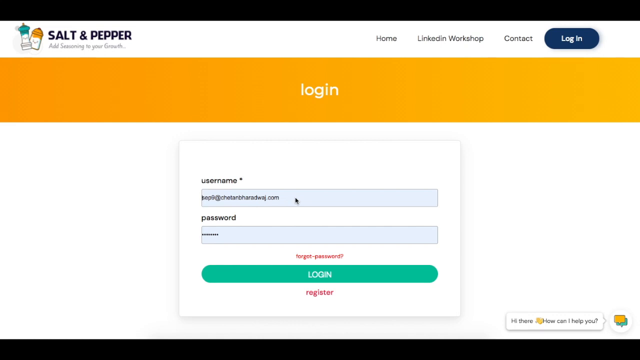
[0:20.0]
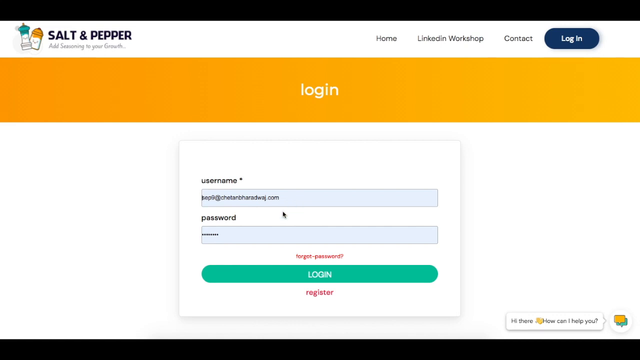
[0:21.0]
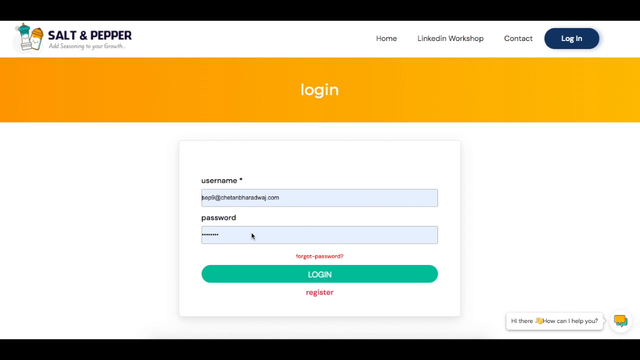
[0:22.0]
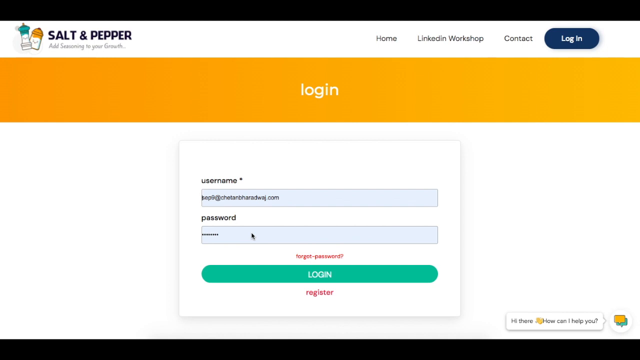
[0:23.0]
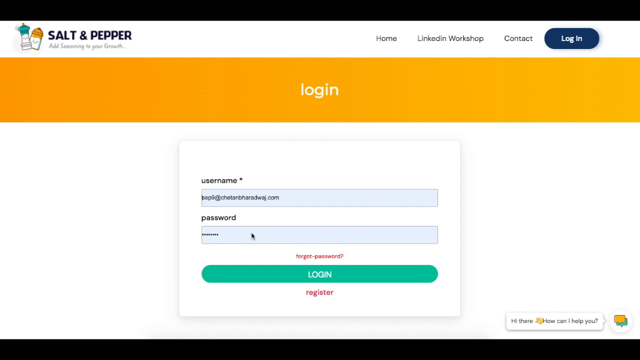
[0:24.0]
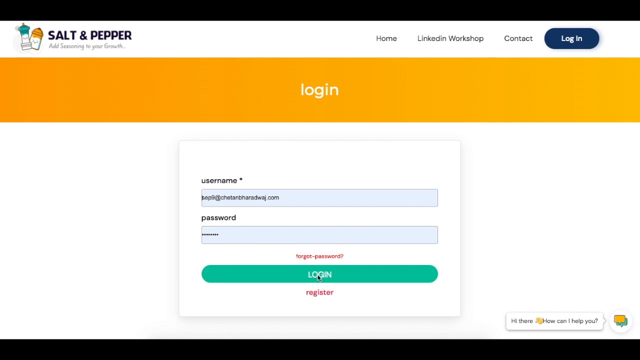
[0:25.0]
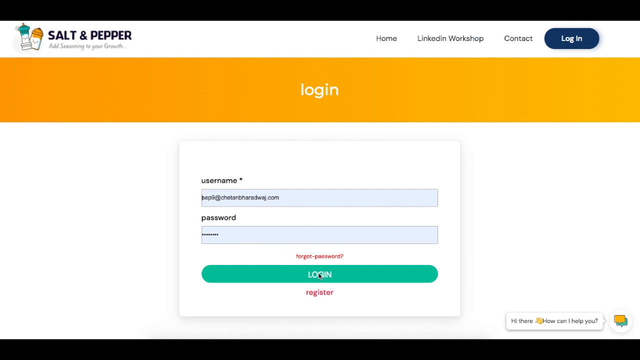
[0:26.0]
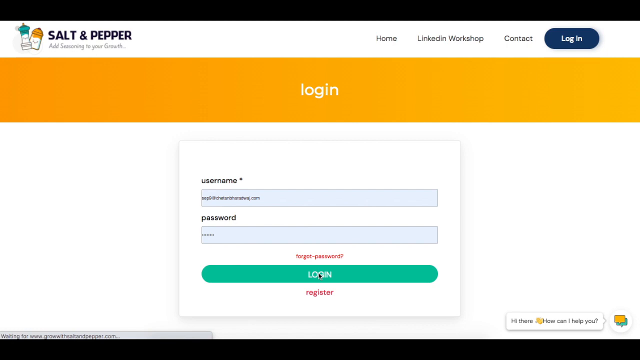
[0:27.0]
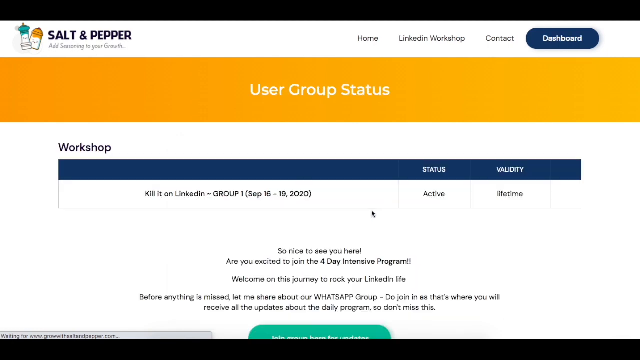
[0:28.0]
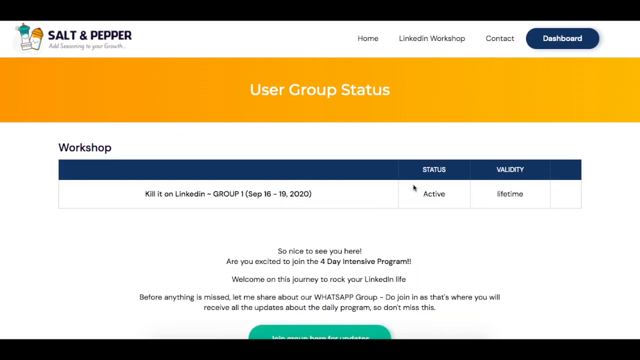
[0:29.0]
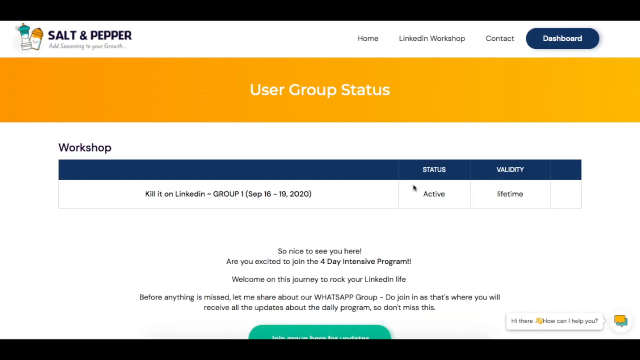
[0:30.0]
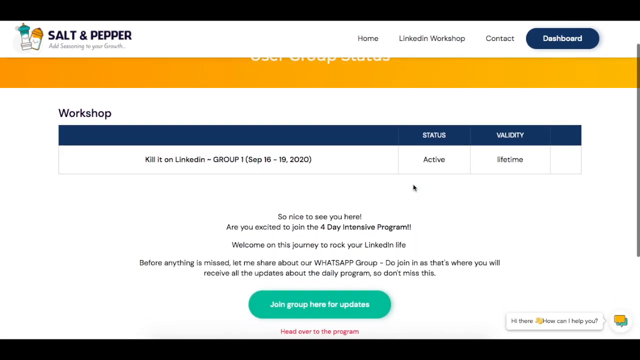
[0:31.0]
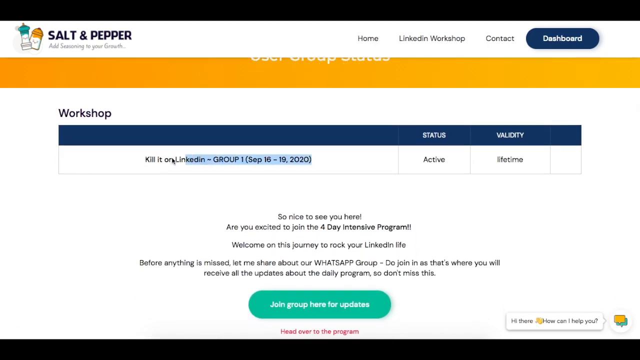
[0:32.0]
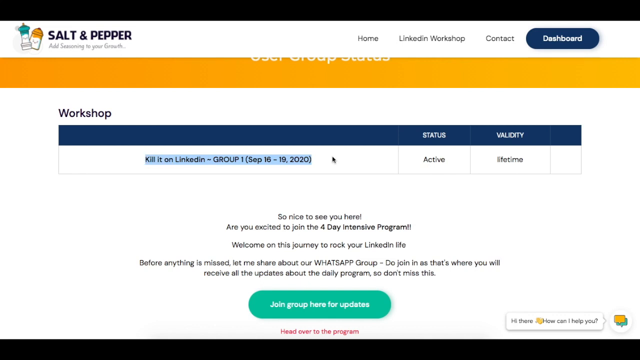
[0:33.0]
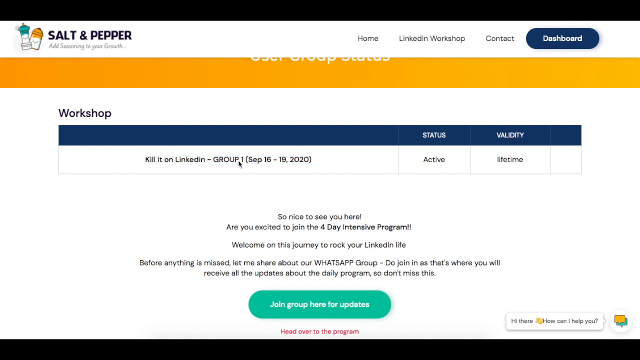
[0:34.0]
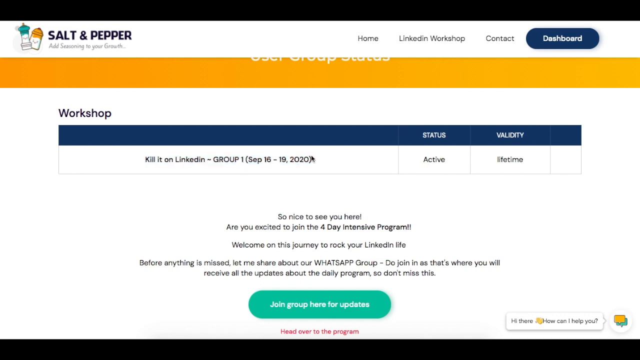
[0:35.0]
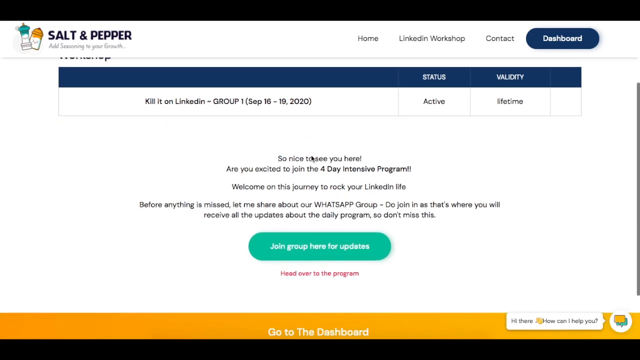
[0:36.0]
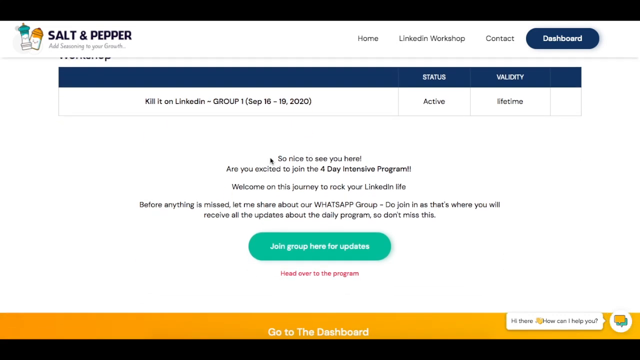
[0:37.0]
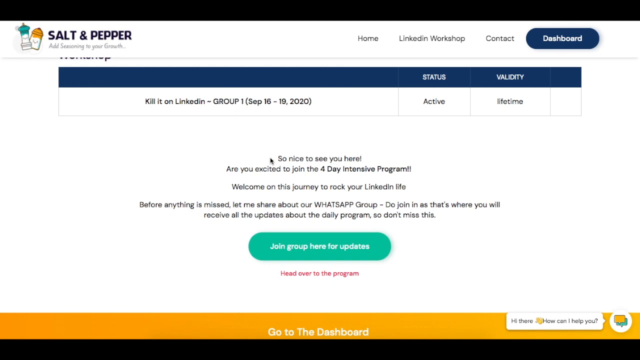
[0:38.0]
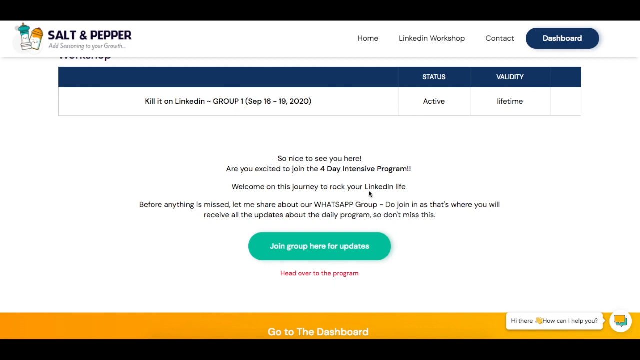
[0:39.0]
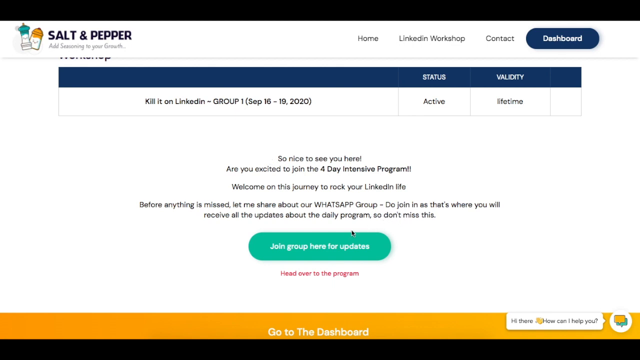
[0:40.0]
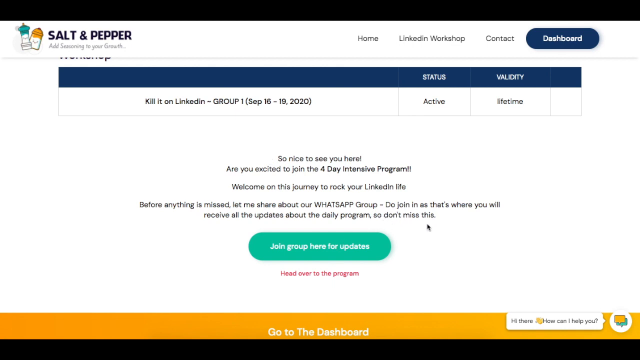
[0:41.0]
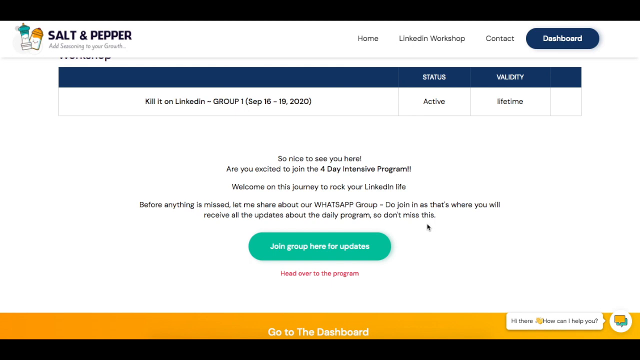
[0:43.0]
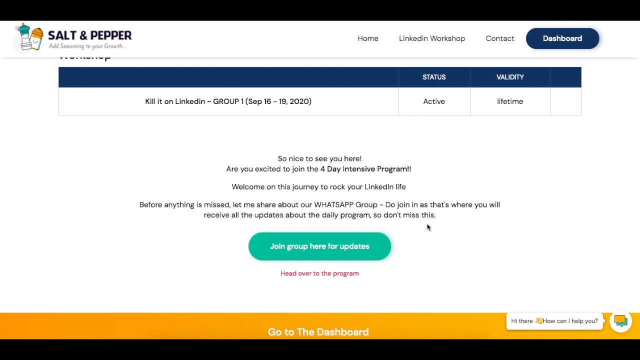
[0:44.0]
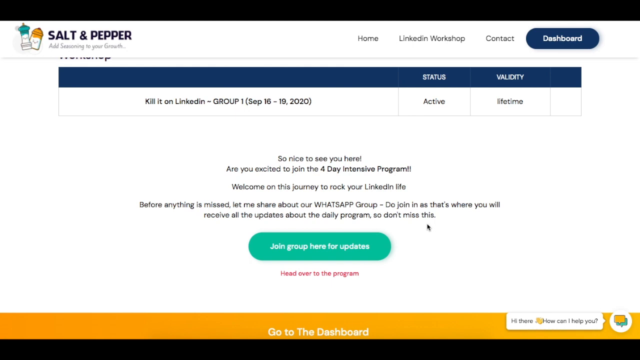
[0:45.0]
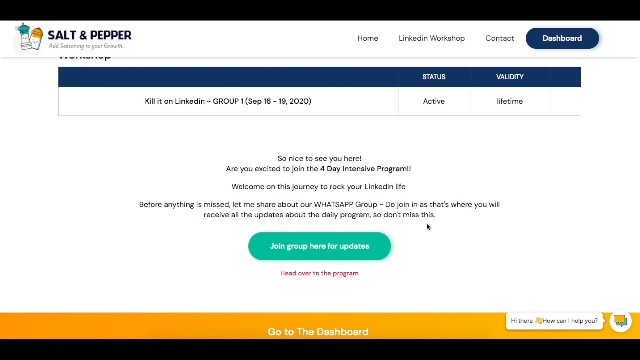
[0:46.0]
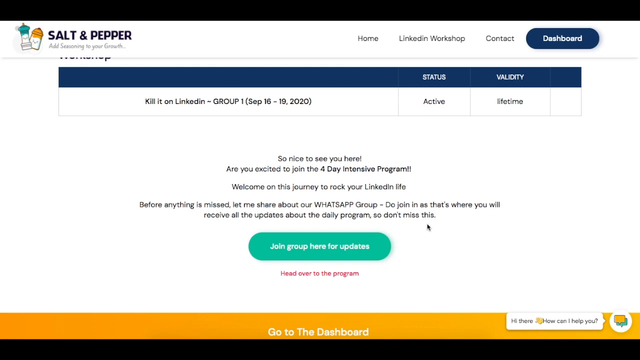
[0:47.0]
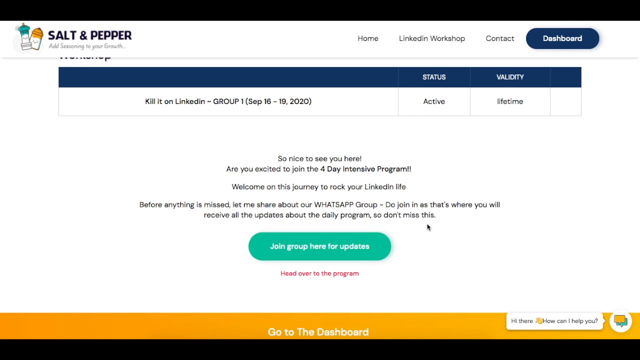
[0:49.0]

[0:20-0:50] The login page of the Salt & Pepper website is shown, and the cursor hits the login button, which opens the account's landing page. The user has signed up for a class listed under the title "Workshop." There is one class in the list, titled "Kill It on LinkedIn," Group 1, September 16th through 19th, 2020. The status is active, and the validity section reads "Shottime." Below the list of workshop classes is the text "So Nice to Meet You Here. Are you excited to join the four-day intensive program? Welcome on this journey to rock your LinkedIn profile. Before anything is missed, let me share about our WhatsApp group. Do join it as that's where you will receive all the updates about the daily program. So do not miss this." The cursor scrolls across the page, then highlights the workshop title and clicks off, releasing the highlight.